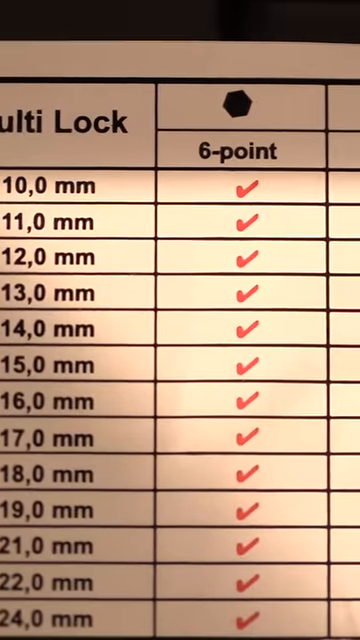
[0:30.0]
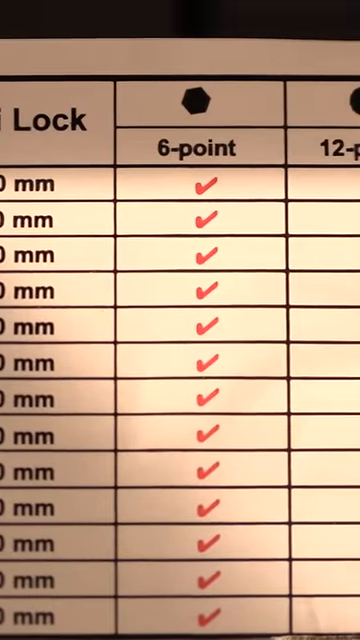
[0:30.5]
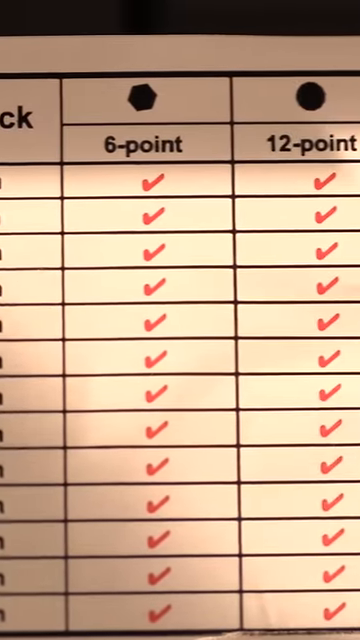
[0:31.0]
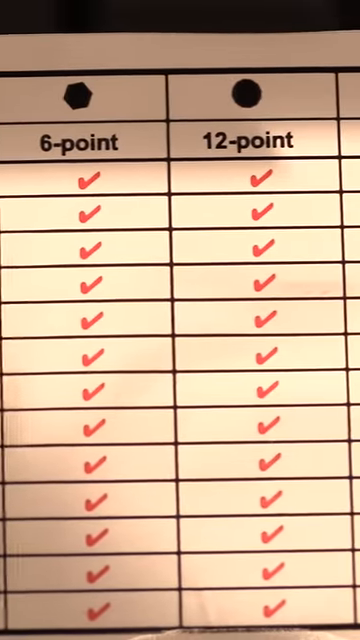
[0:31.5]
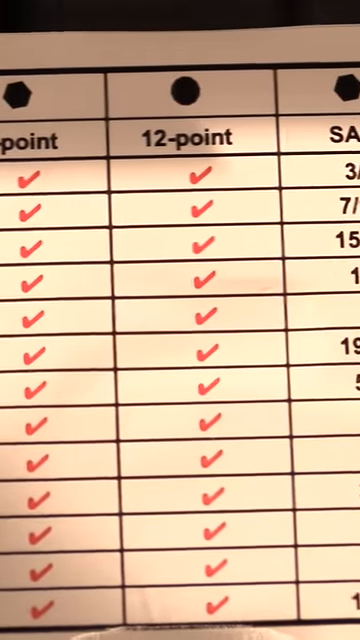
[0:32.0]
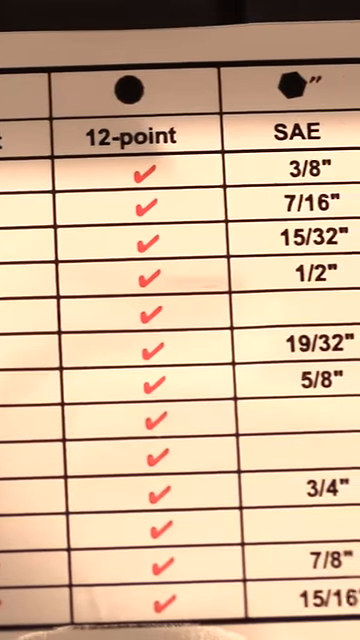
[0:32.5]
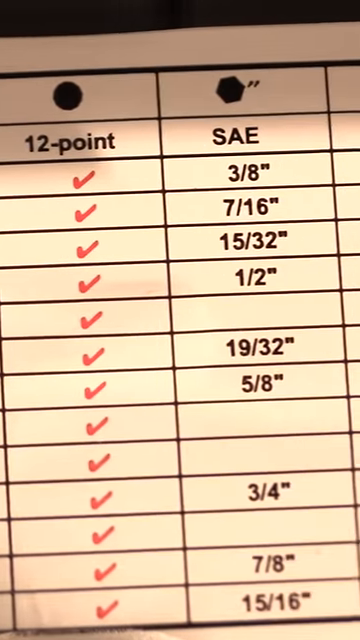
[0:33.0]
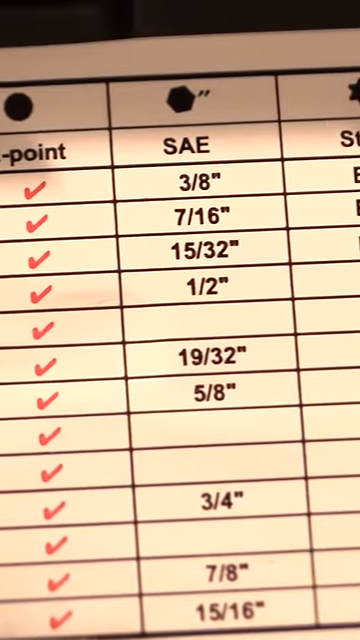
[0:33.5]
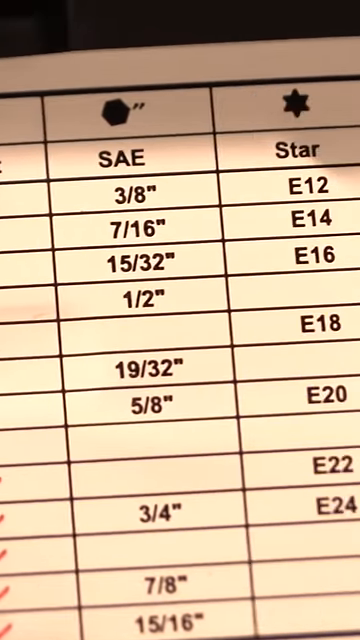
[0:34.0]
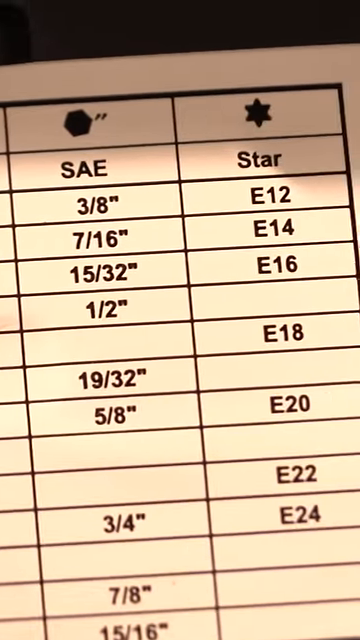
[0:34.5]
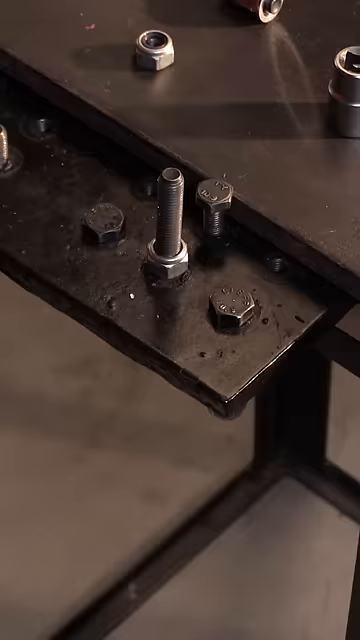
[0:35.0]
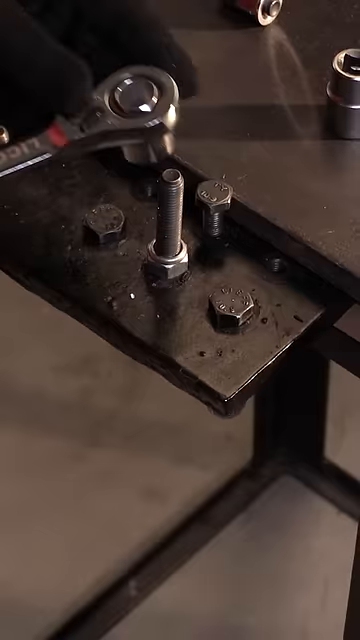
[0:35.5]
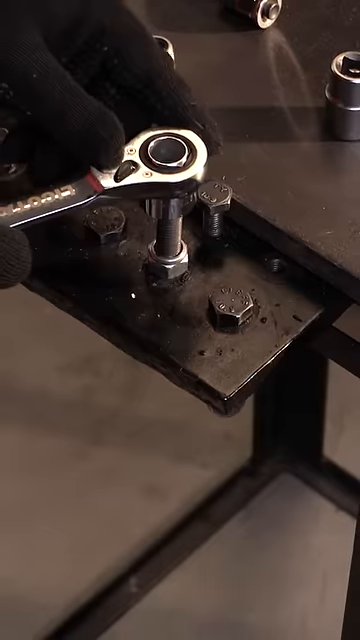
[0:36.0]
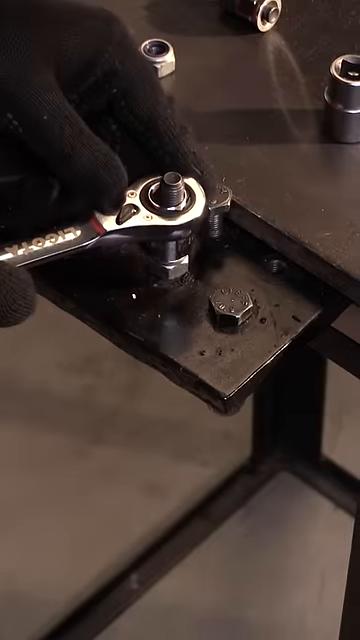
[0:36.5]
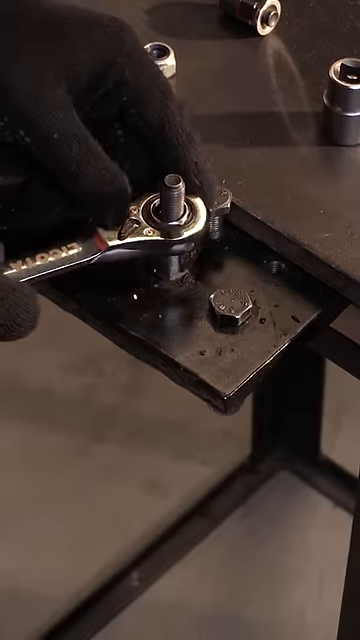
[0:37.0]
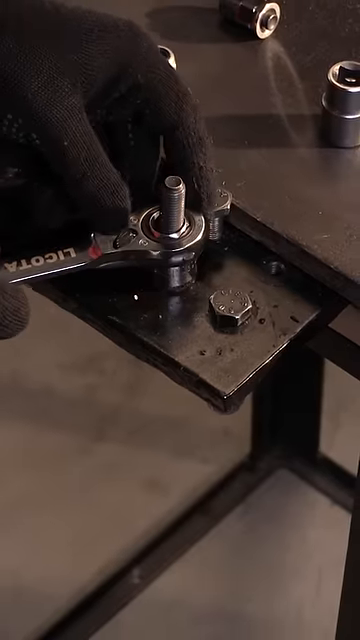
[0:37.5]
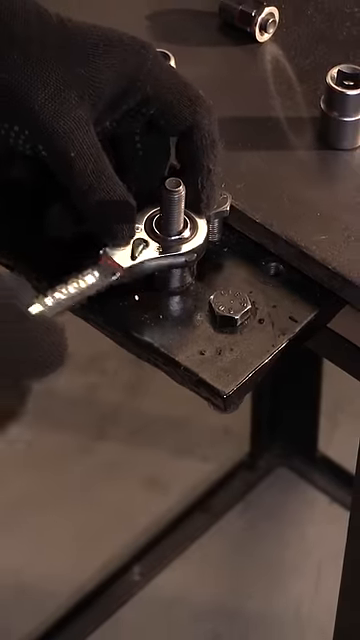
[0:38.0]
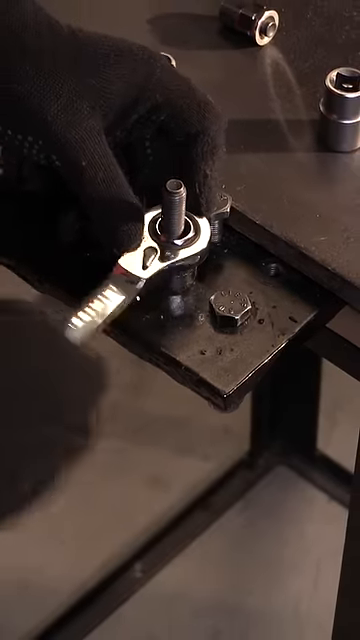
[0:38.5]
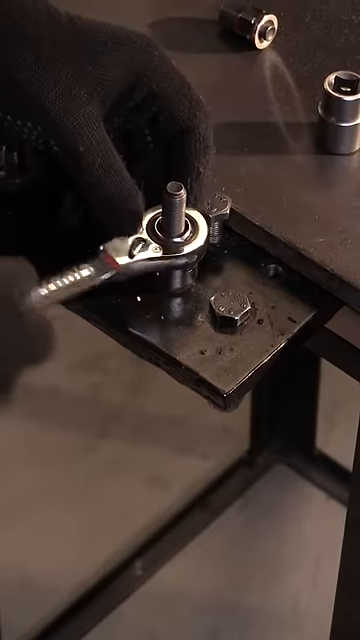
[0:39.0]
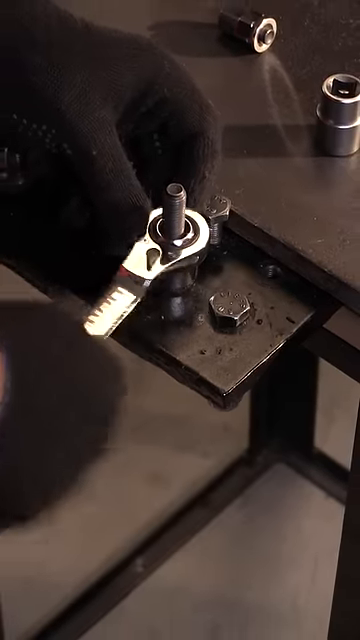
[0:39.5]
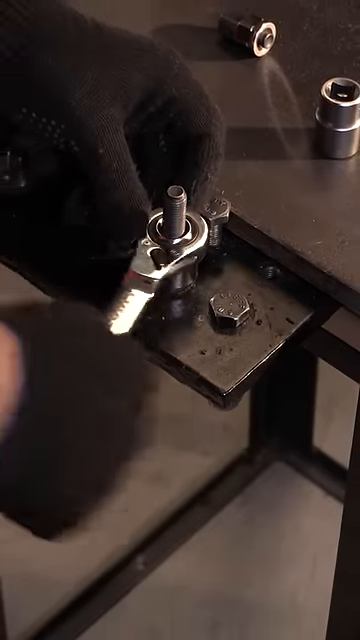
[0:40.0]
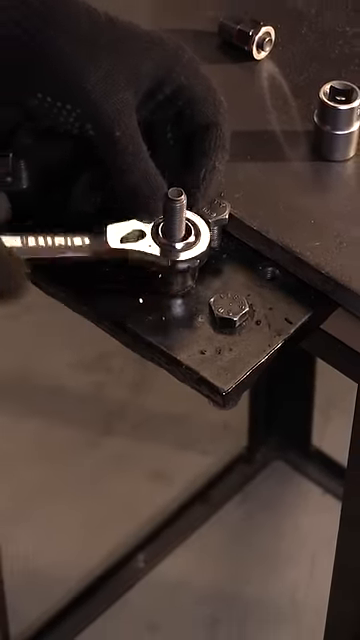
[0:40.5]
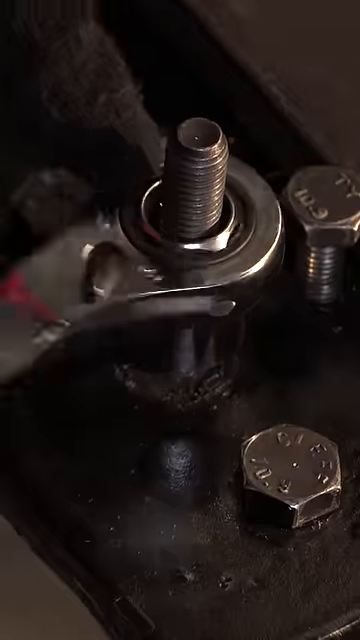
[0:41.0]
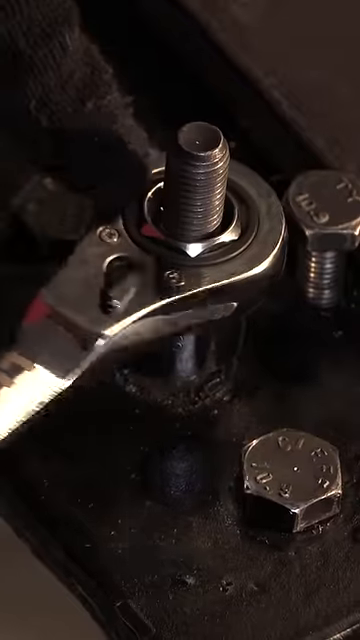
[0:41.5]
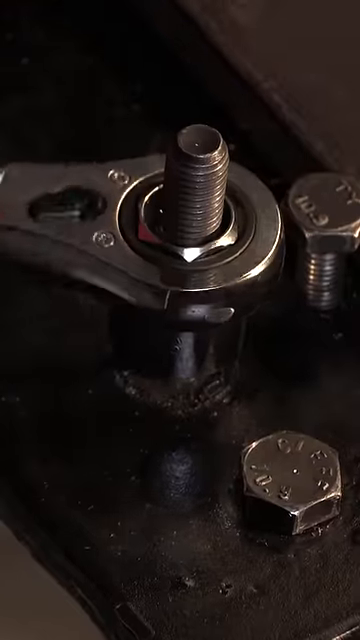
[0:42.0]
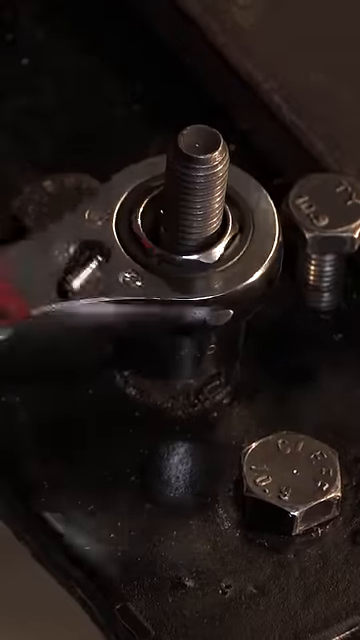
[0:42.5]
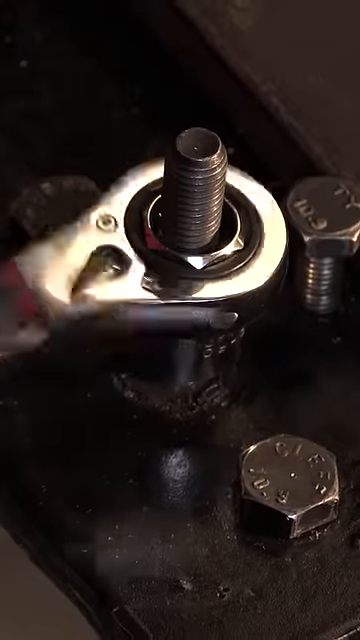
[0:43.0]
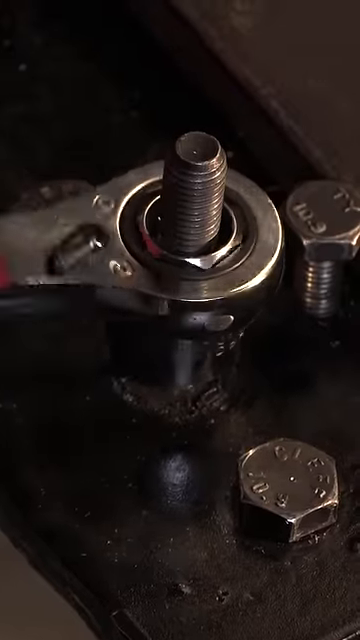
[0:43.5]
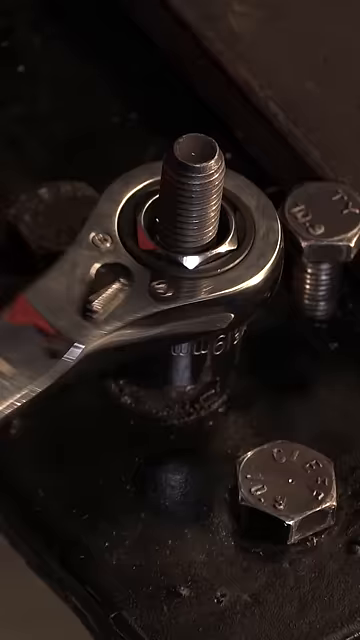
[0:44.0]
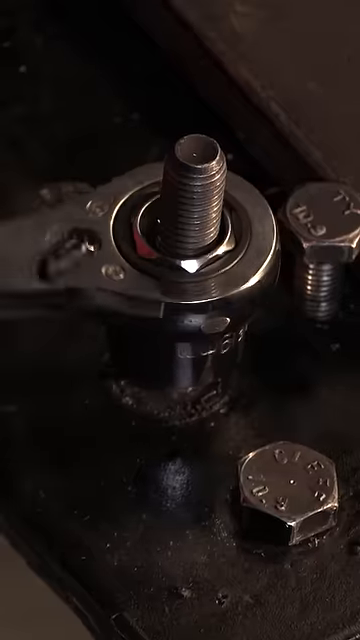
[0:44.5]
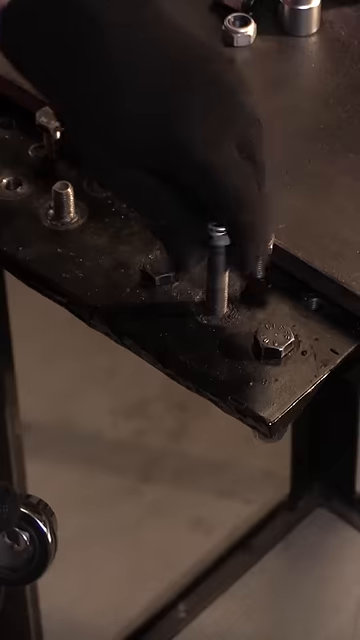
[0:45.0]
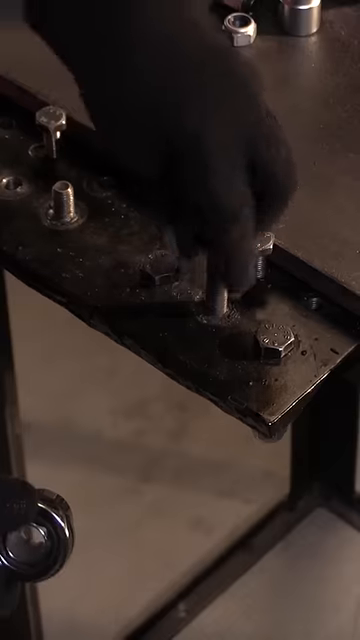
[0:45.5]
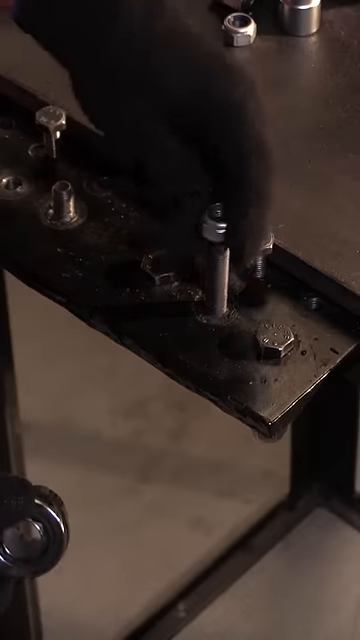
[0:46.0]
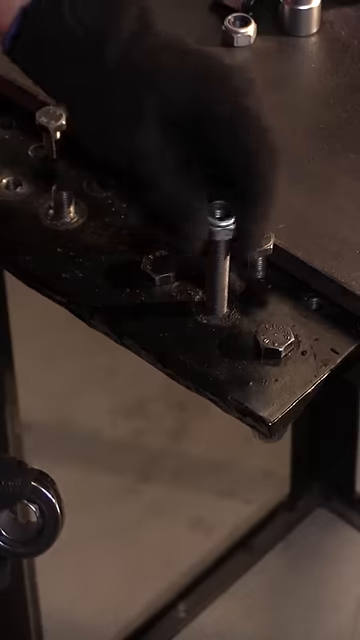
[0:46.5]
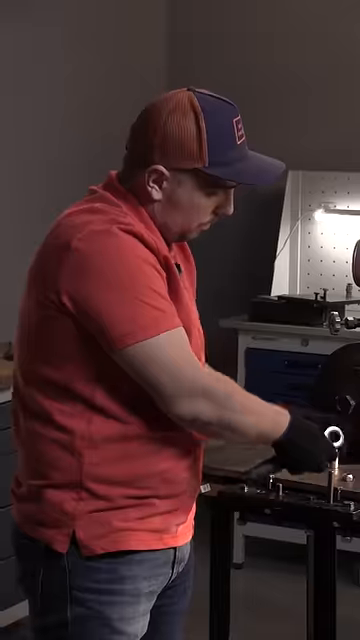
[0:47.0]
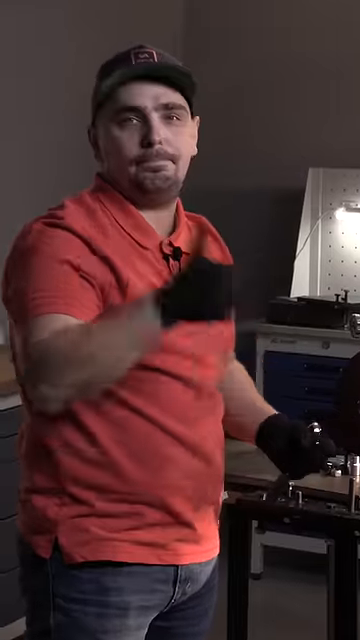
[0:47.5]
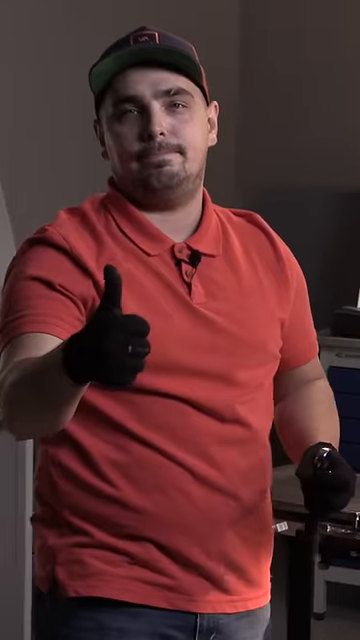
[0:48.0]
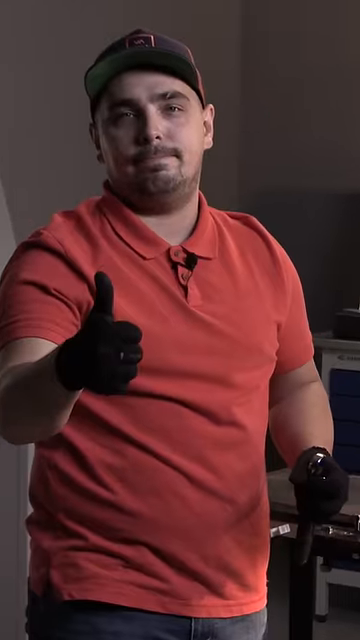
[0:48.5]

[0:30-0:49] A close-up shows a white bracketed list with the words "multi-lock". Below them are "10mm, 11mm, 12mm, 13mm, 14mm, 15mm, 16mm, 17mm, 18mm, 19mm, 21mm, 22mm, and 24mm". The list then shows that all of these sizes are available in 6-point sockets and also in 12-point sockets, and that some are available in SAE-style sockets: 3/8 inch, 7/16 inch, 15/32 inch, 1/2 inch, 19/32 inch, 5/8 inch, 3/4 inch, 7/8 inch, and 15/16 inch. Star formation attachments are also available in various sizes.